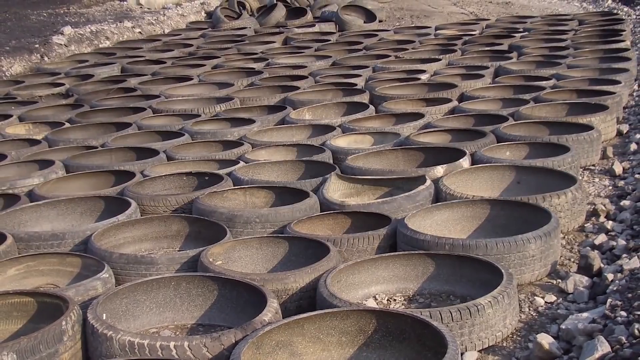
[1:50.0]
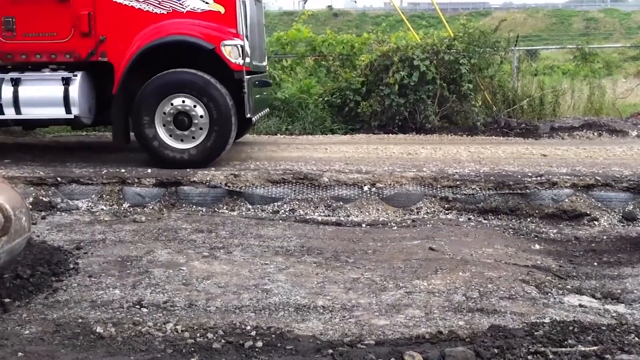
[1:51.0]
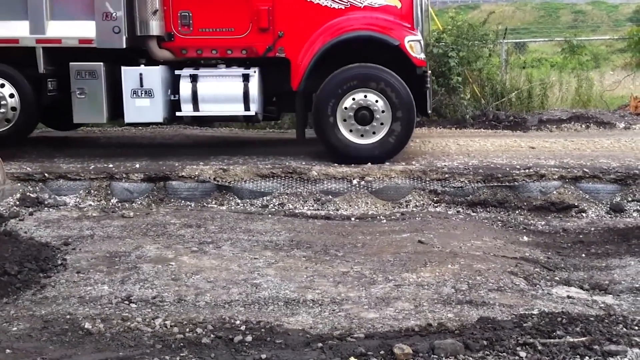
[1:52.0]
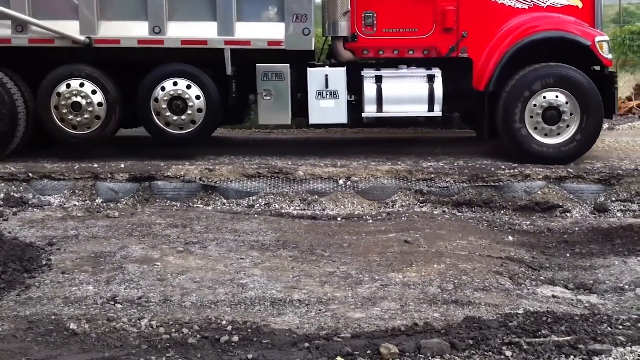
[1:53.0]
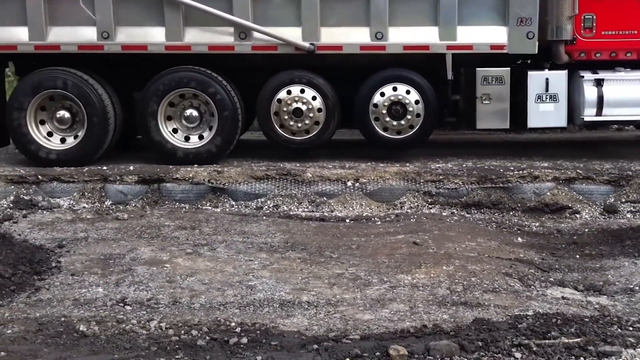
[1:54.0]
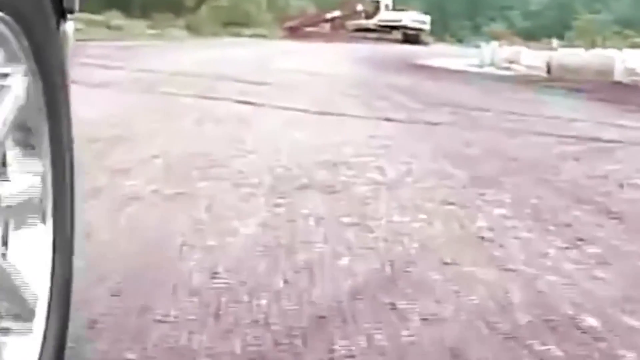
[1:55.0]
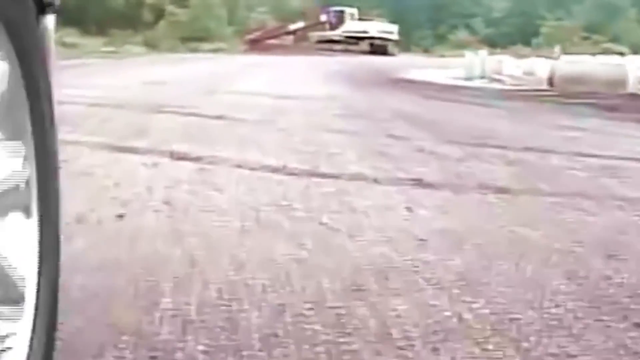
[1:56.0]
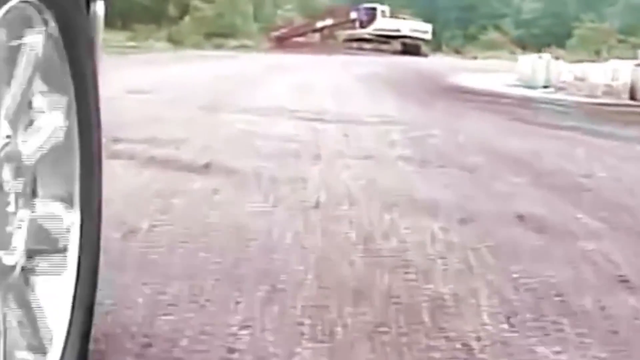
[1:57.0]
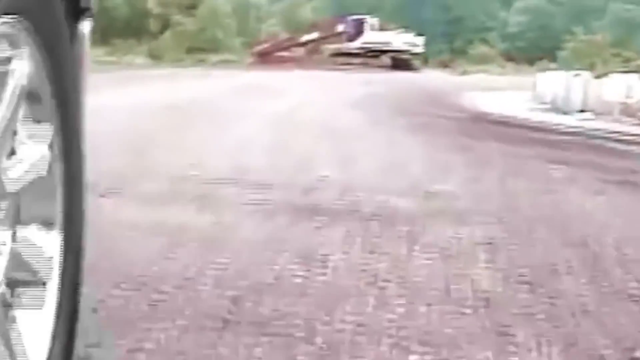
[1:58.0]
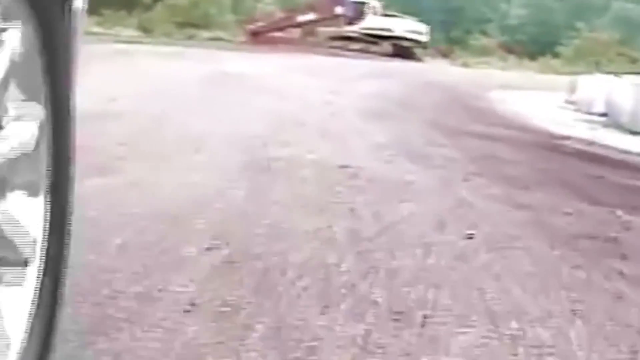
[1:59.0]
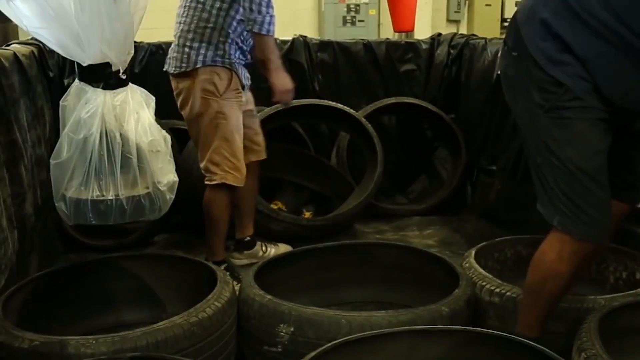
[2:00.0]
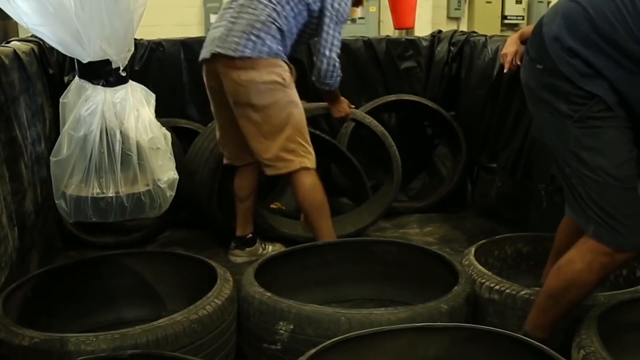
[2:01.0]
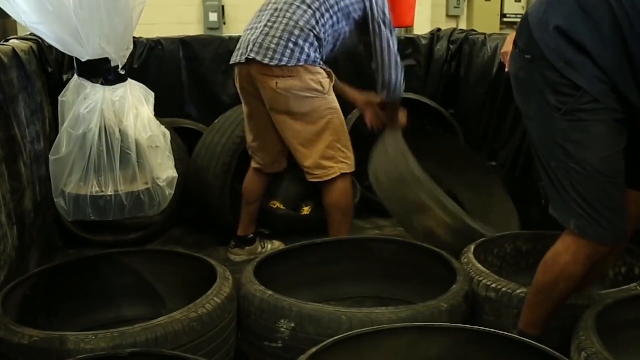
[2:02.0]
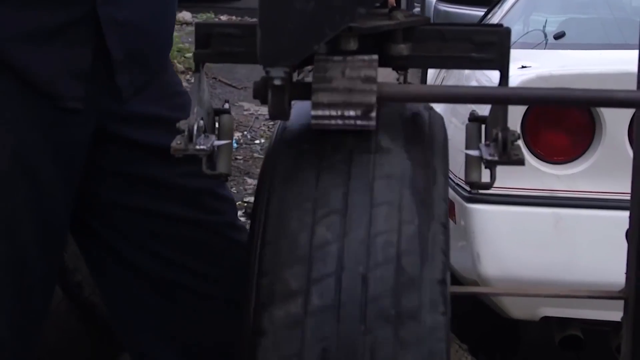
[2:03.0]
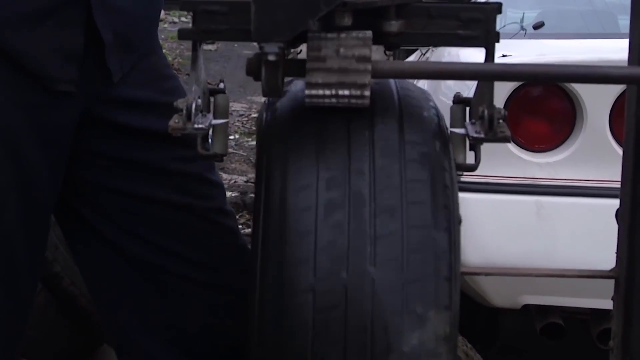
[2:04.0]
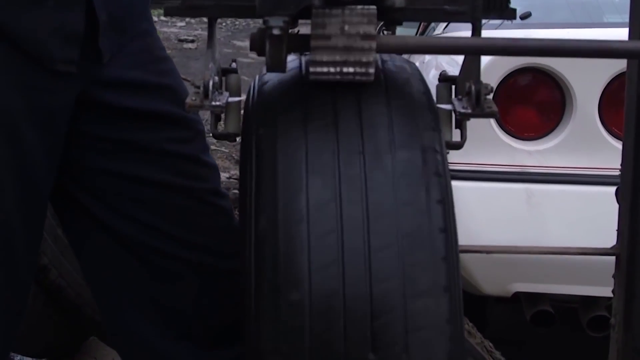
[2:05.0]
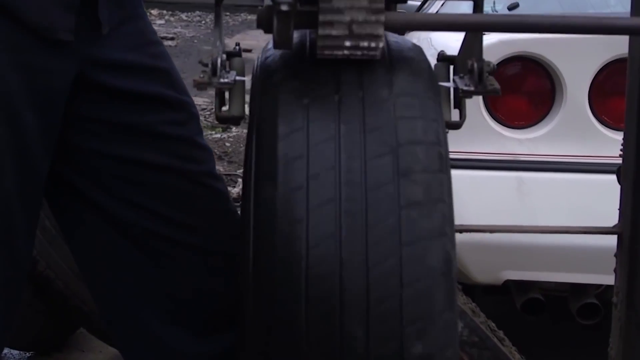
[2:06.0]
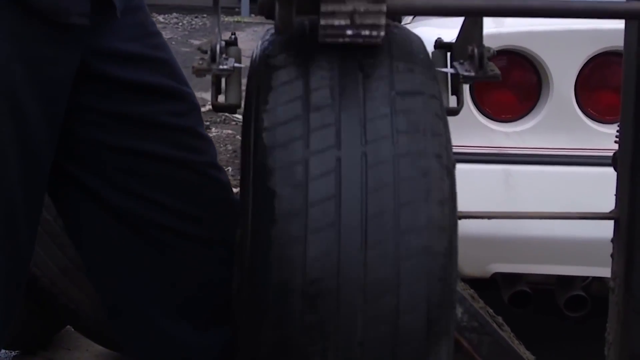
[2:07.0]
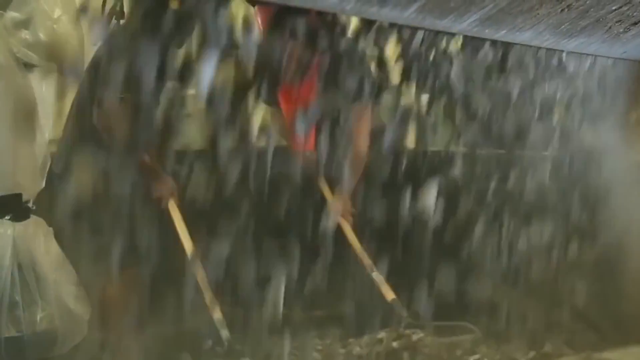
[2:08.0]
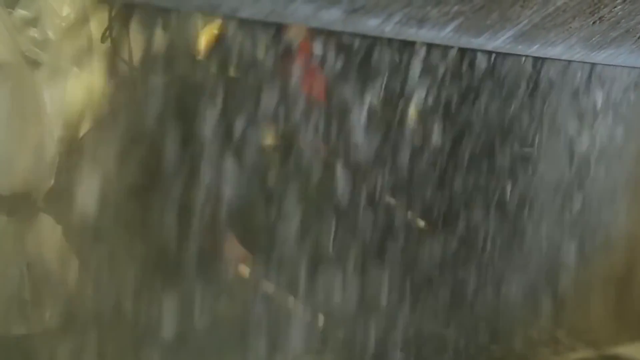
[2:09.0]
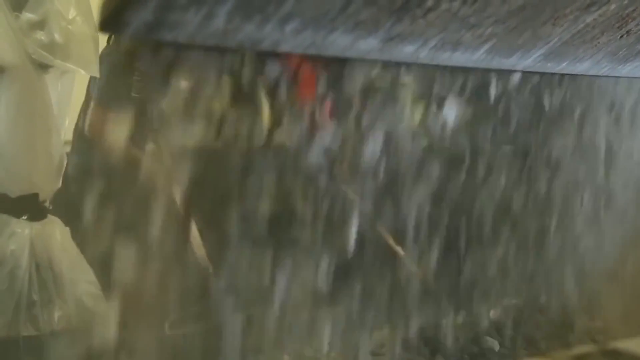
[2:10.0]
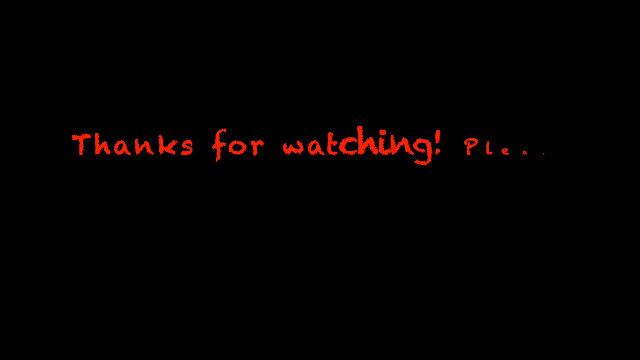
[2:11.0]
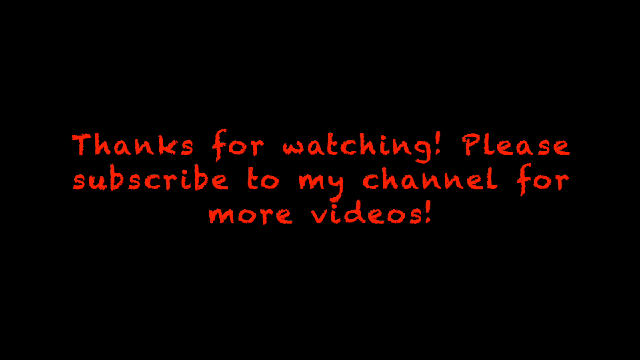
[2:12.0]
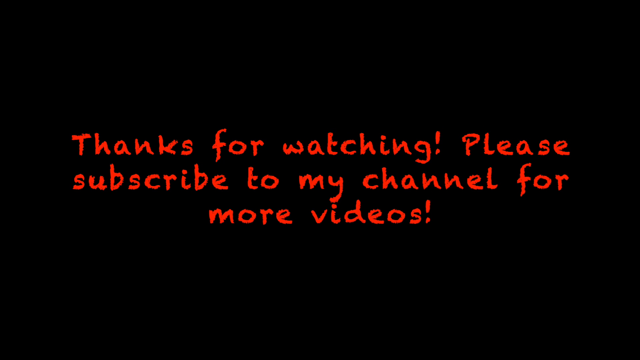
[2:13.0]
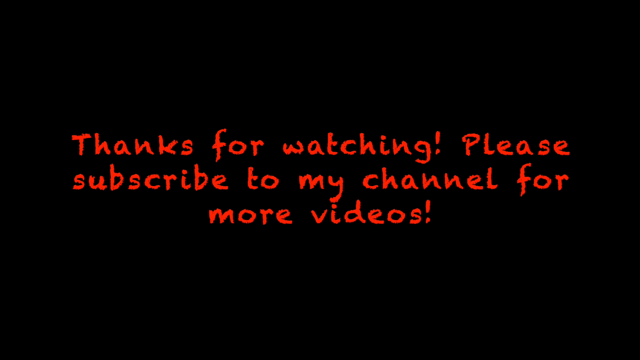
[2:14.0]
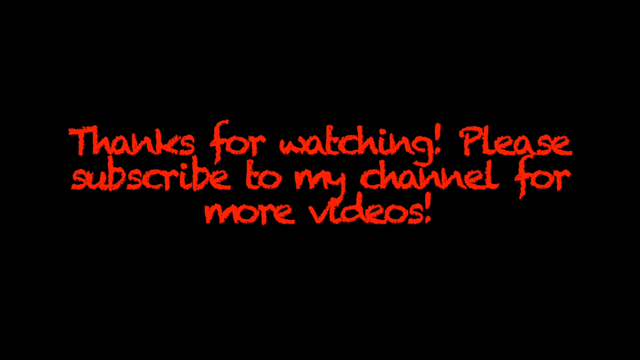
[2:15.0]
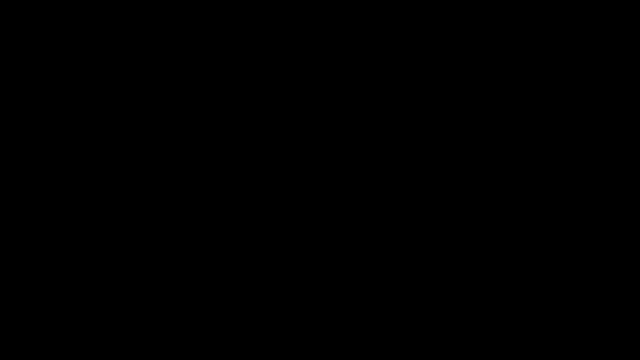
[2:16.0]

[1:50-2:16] Wheels are filled with dirt poured over them. From the side of the ground, the very edges of the black wheels are still visible before they are completely covered. An 18-wheeler or some sort of construction vehicle drives over them, and the camera, attached to the wheel, follows it down the road. The scene then moves to some sort of building, where more wheels are placed from a standing vertical position to lying horizontally on their sides. More shots show wheels being placed as people use shovels to cover them with black dirt falling from a dirt-carrying vehicle. Finally, red text appears on a black screen: "thanks for watching please subscribe to my channel for more videos."